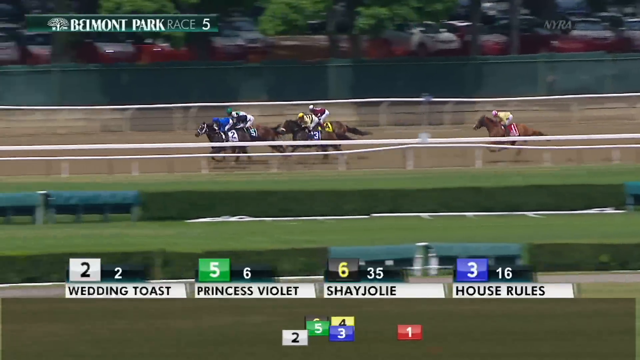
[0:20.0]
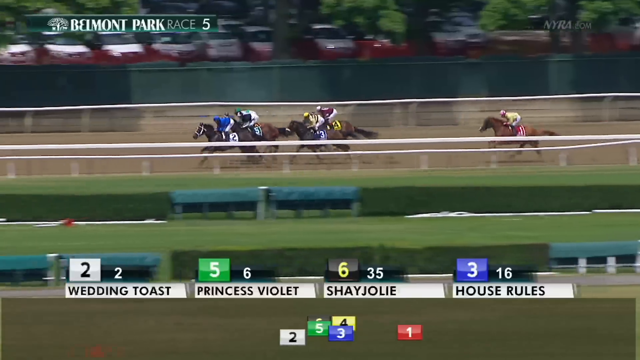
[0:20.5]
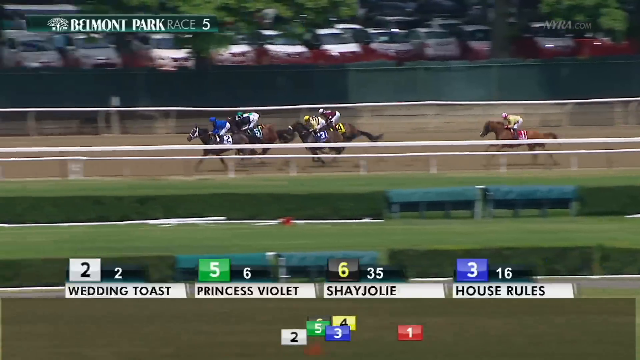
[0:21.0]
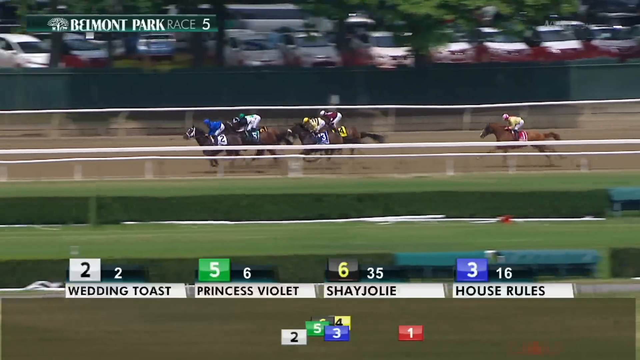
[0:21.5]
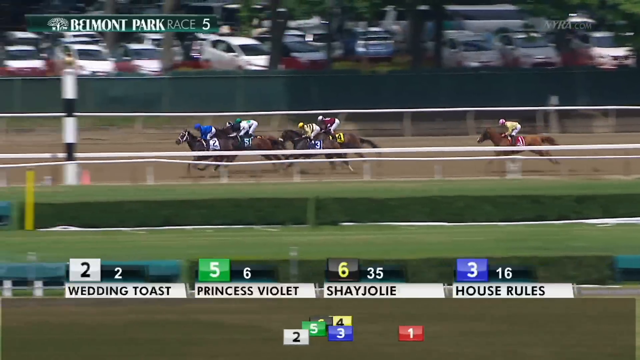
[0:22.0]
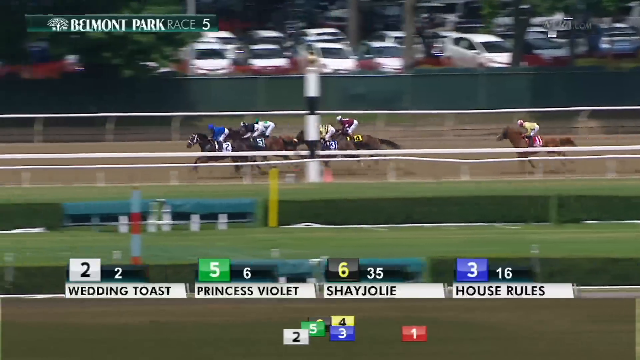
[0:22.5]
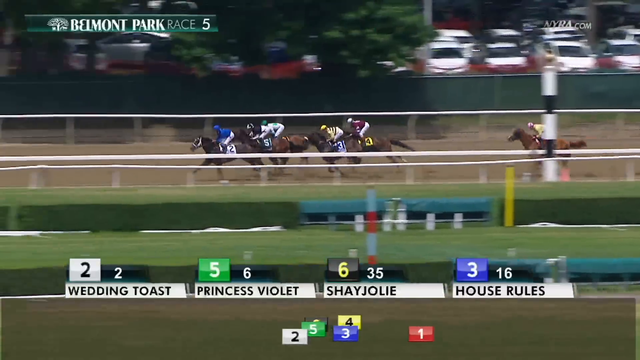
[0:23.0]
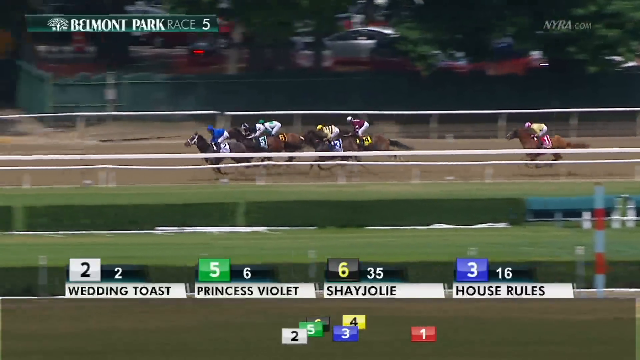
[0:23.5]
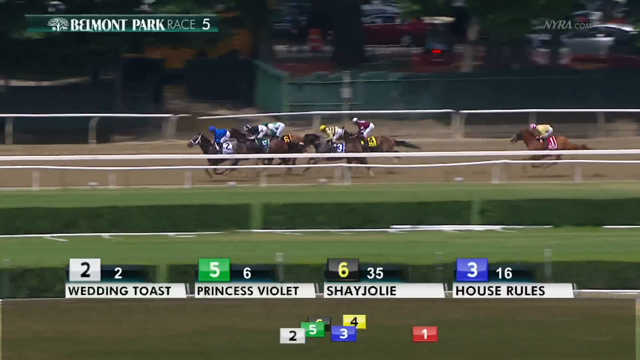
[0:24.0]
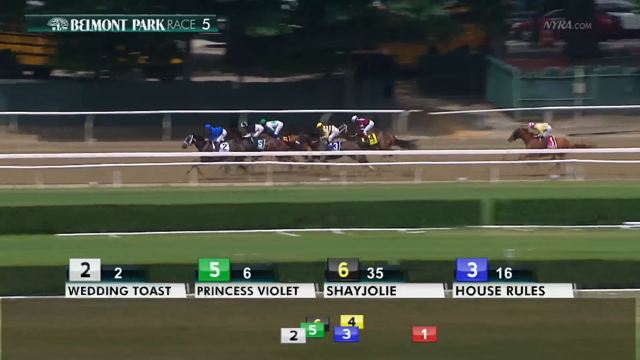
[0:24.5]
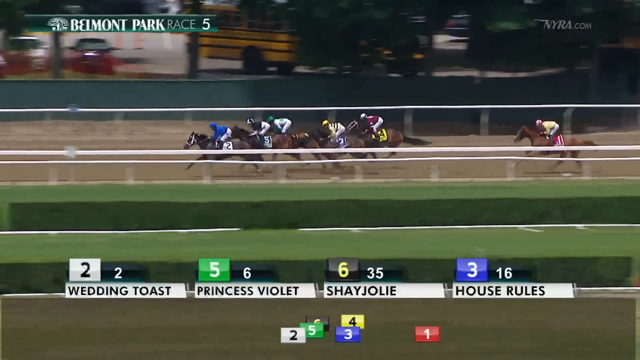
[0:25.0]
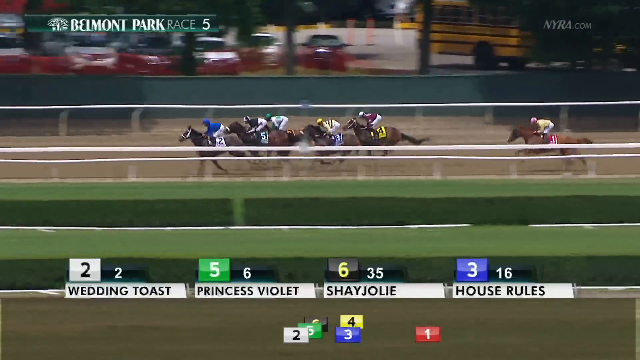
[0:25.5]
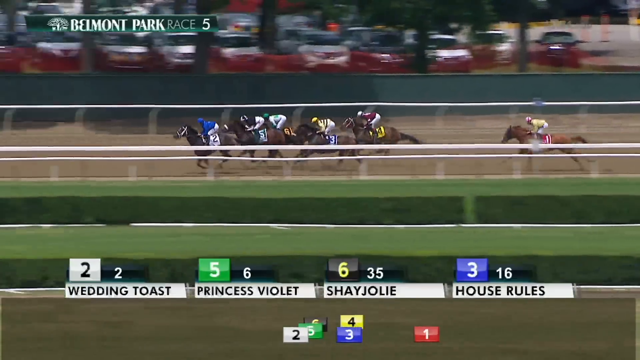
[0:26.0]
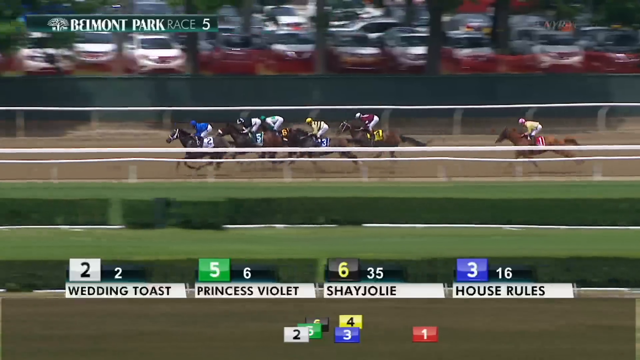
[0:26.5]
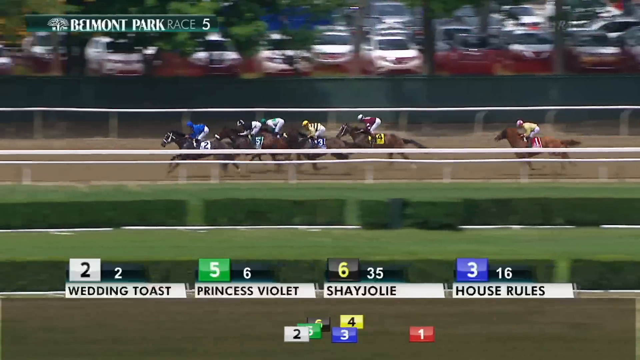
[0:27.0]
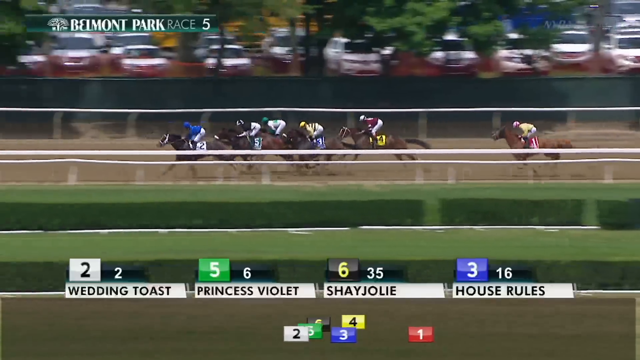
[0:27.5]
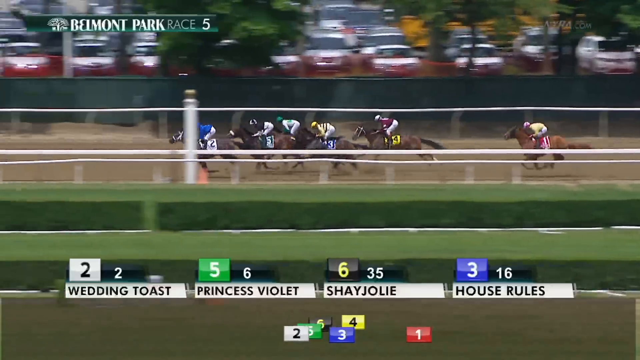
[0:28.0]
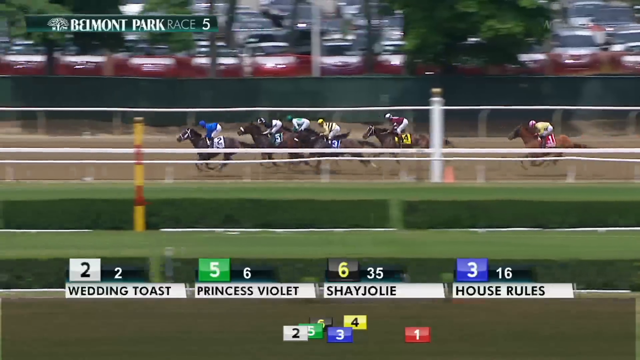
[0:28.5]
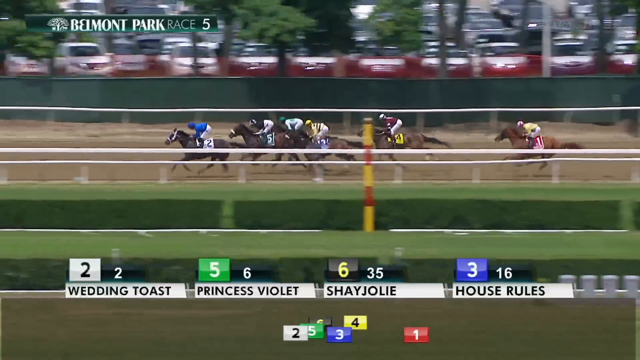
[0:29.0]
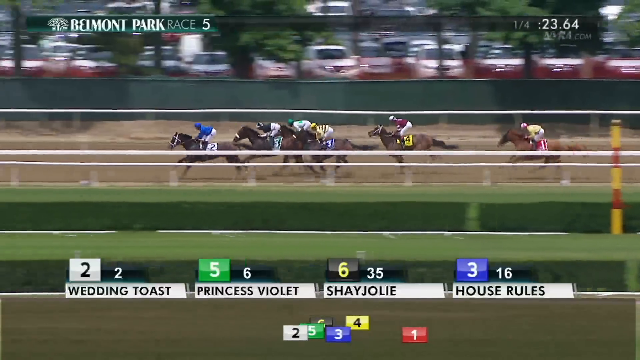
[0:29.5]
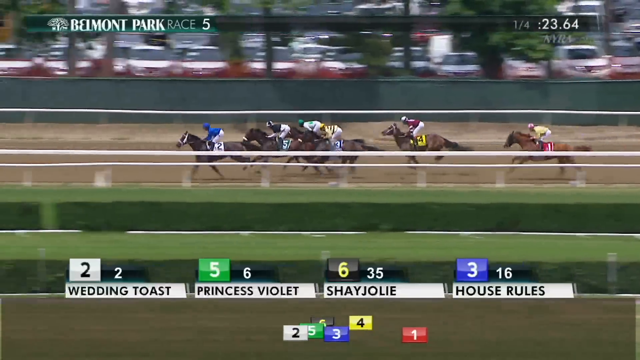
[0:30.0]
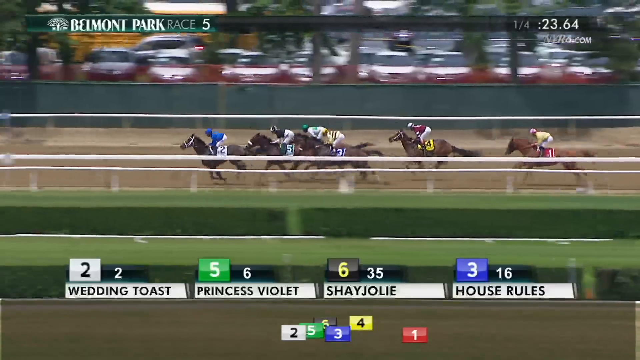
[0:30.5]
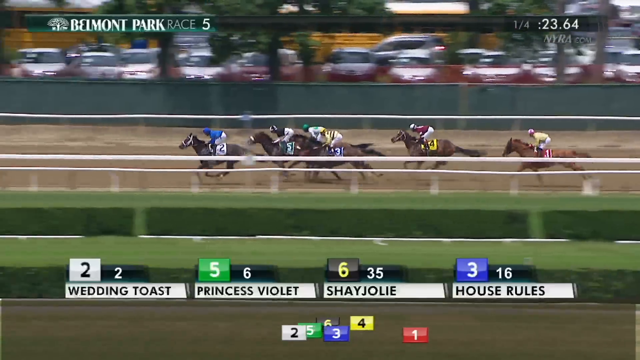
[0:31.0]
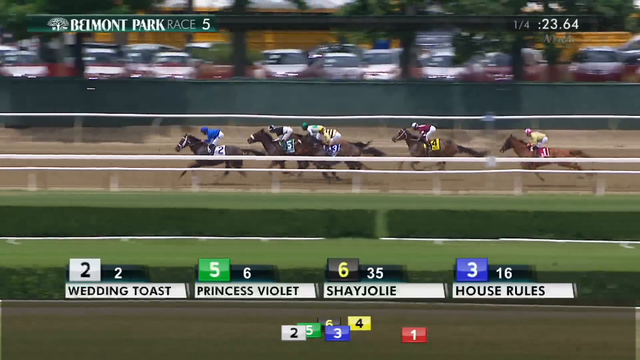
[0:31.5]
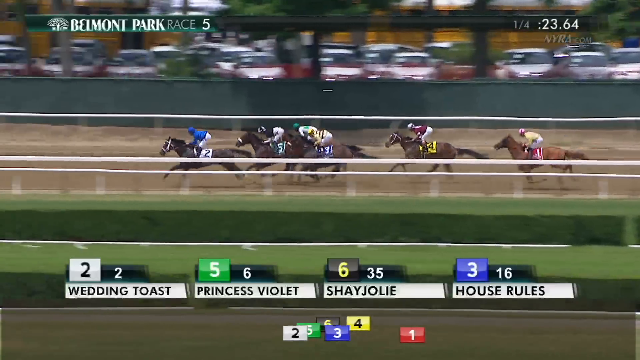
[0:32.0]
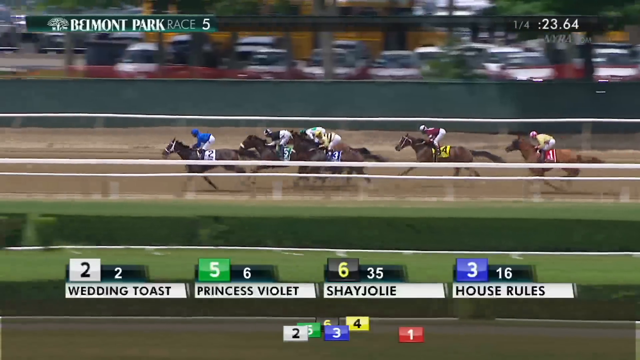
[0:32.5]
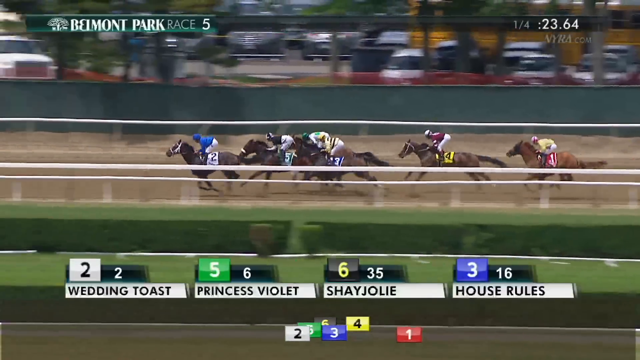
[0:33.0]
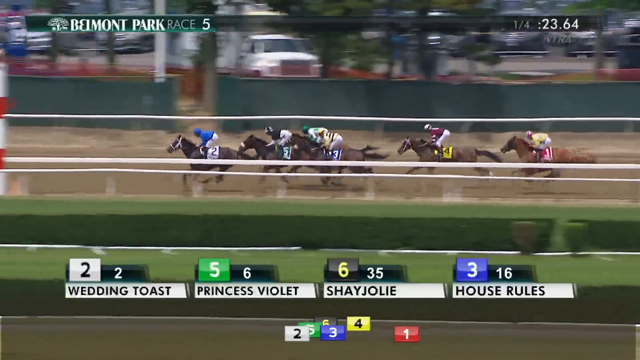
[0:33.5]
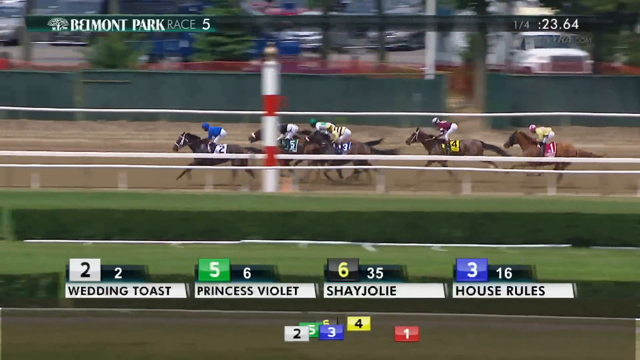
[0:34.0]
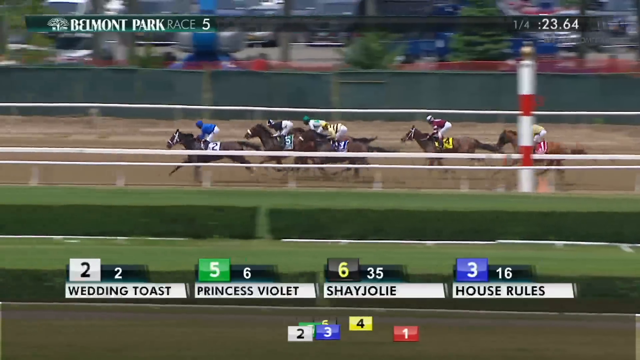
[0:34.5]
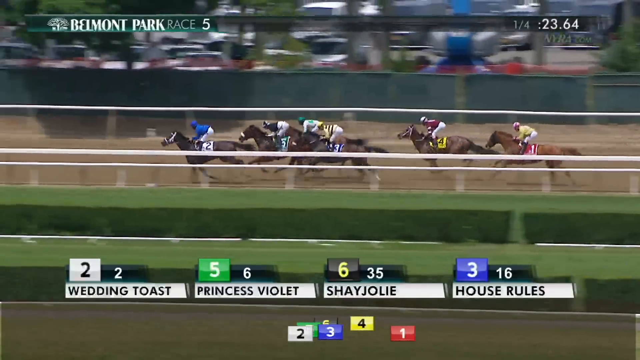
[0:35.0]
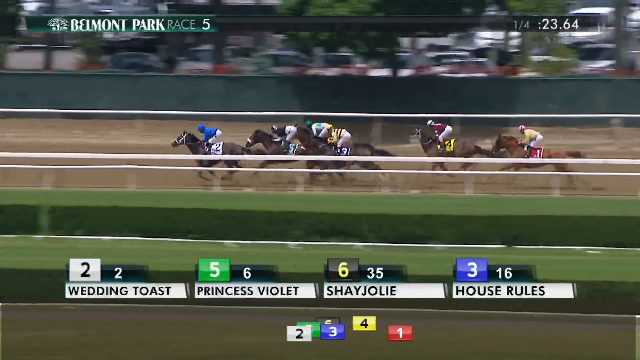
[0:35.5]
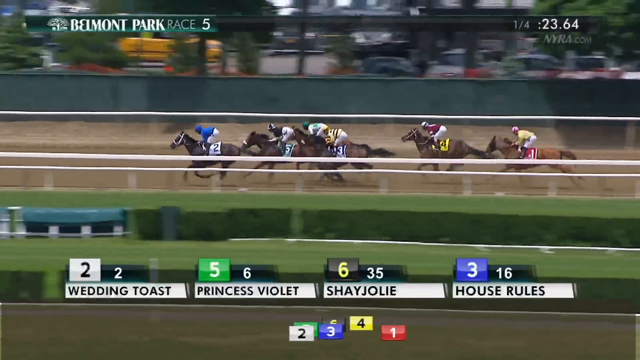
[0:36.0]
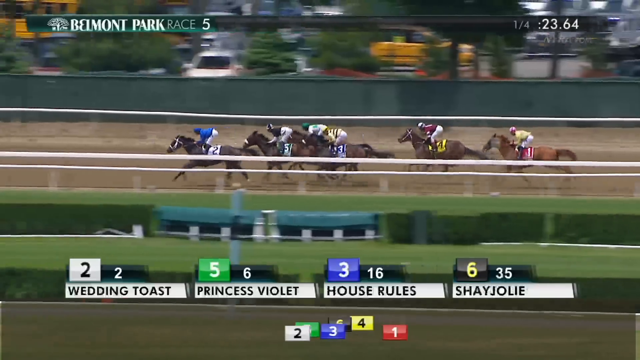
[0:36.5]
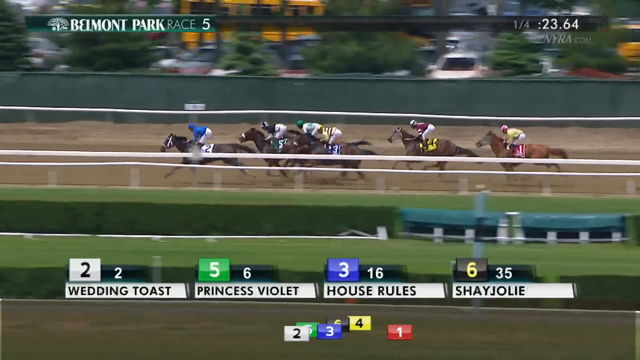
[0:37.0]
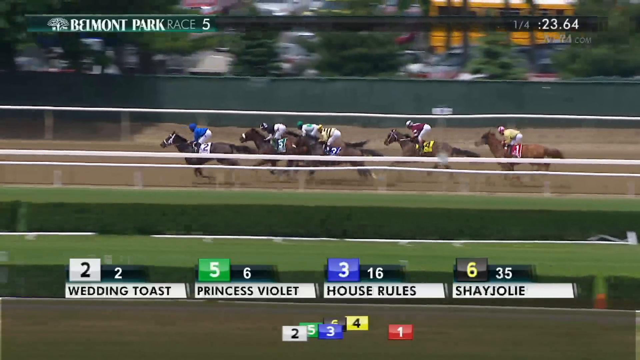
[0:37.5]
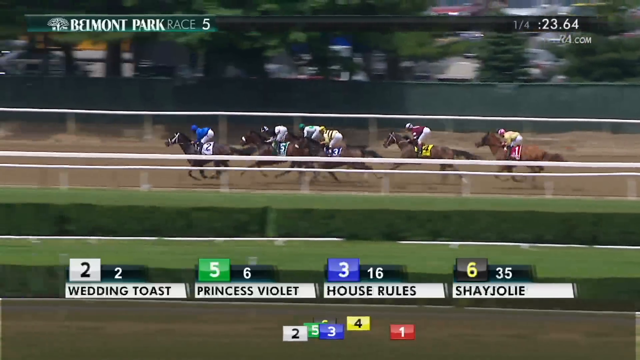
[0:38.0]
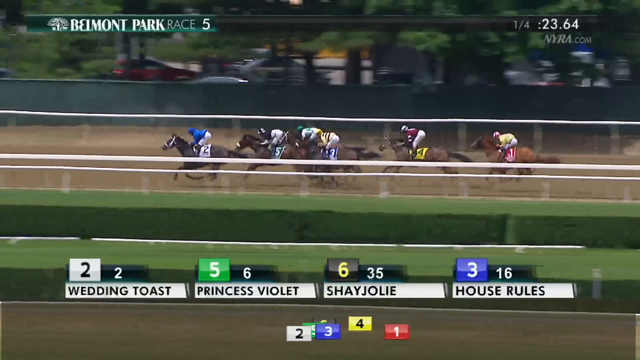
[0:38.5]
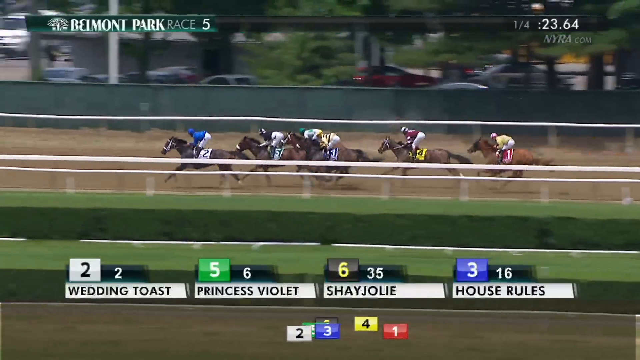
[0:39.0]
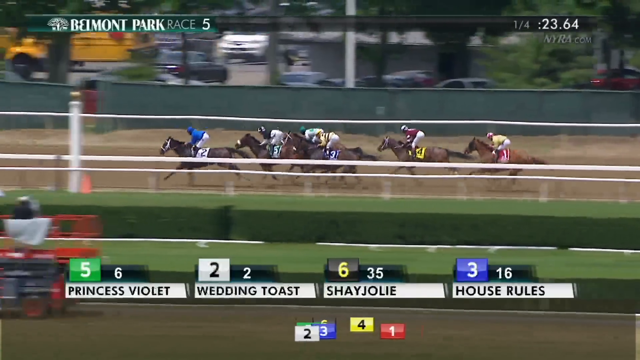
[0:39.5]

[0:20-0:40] Green and white text in the upper left of the screen identifies this as the fifth race of the day at Belmont Park in Queens, New York. Text at the bottom of the screen identifies the first five horses. The number two horse, Wedding Toast, leads by a nose at the first turn. Number five, Princess Violet, is just behind; number six, Shayjolie, is in back; and number three, House Rules, is in fourth position. As the horses continue, number two opens up a one-length lead on number five, with number three third and number four fourth. Number two holds the lead in the back stretch, while numbers five and three both look strong, as does number 35, which is partially obscured by numbers five and three. Trimmed green hedges are in front of the horses, and the background of summer foliage is usually blurred because of their speed.